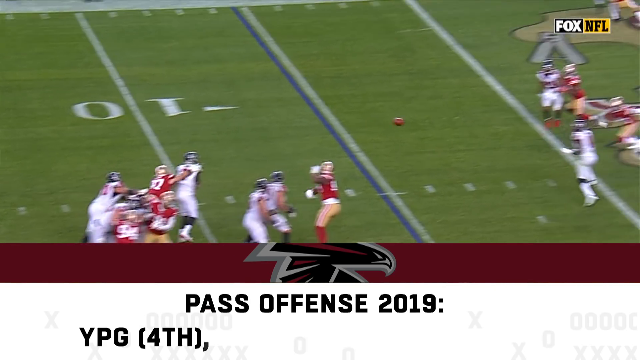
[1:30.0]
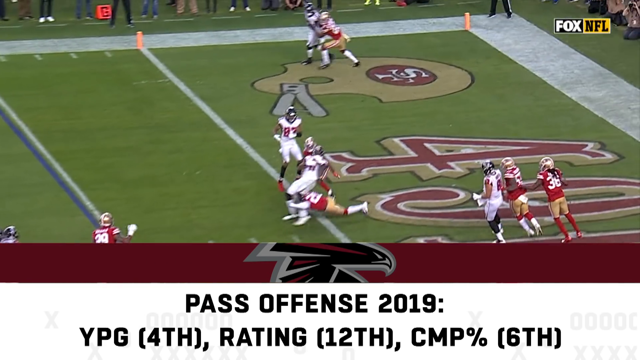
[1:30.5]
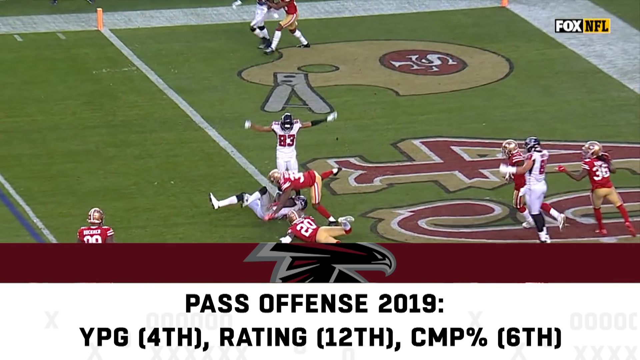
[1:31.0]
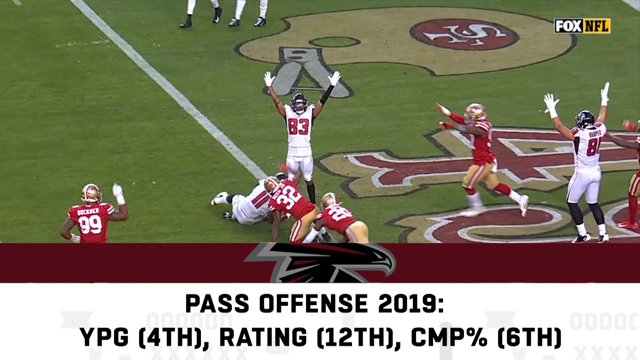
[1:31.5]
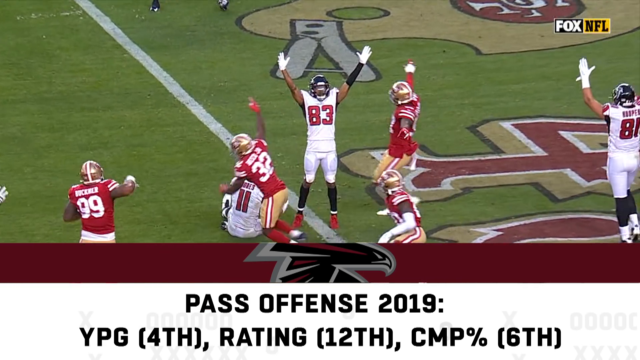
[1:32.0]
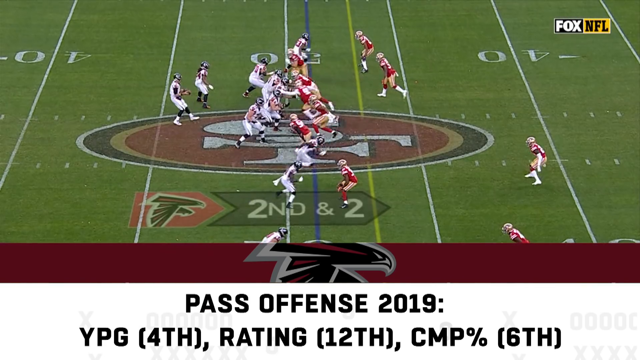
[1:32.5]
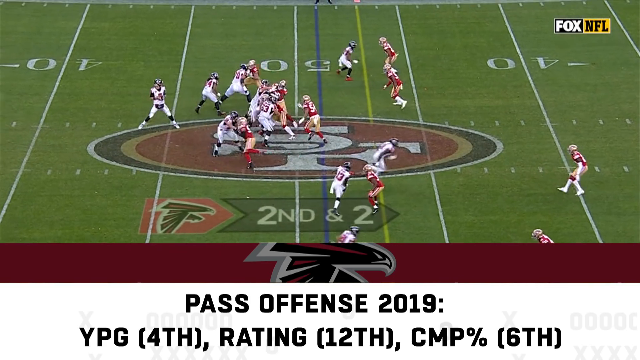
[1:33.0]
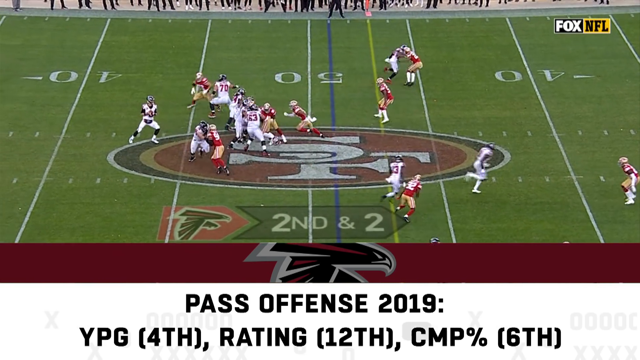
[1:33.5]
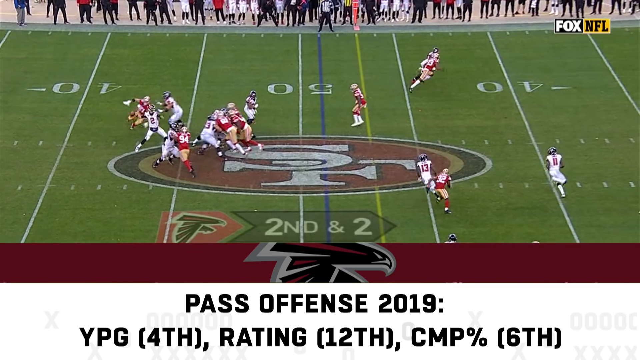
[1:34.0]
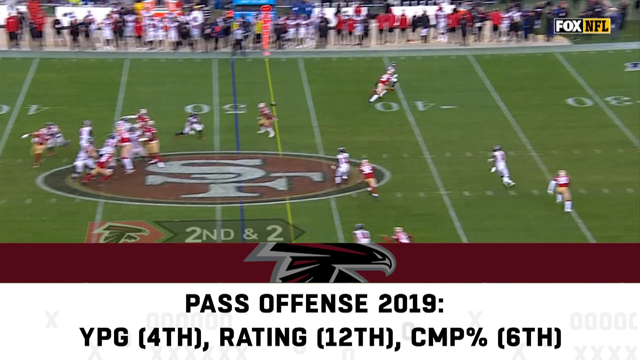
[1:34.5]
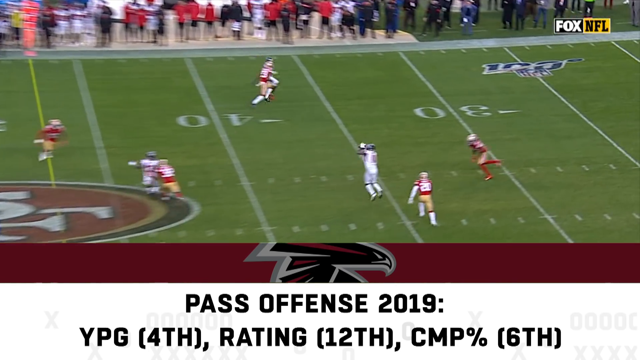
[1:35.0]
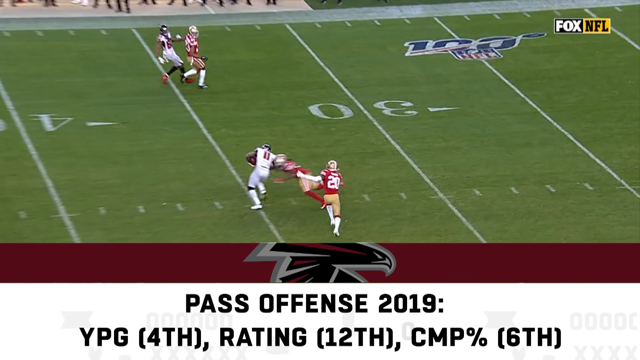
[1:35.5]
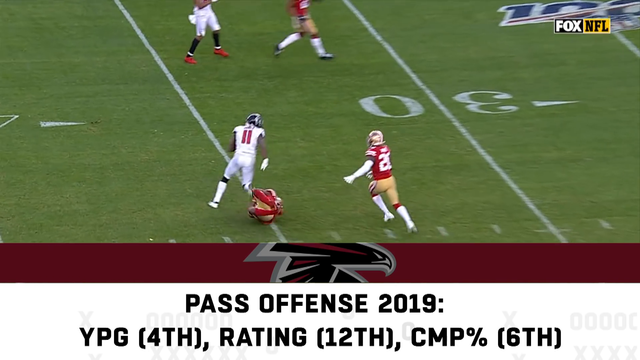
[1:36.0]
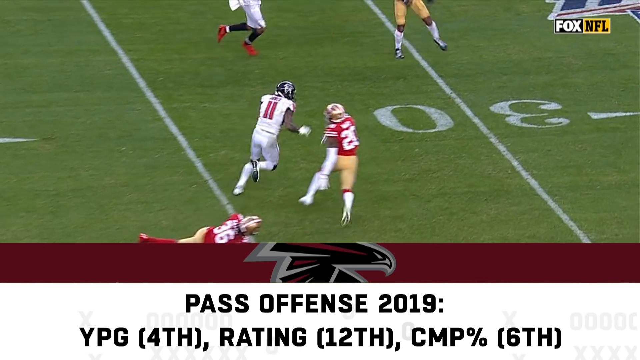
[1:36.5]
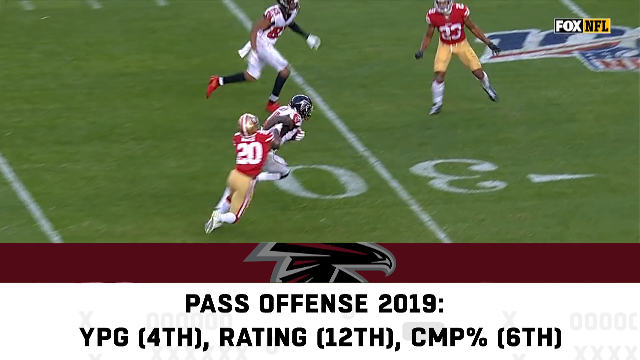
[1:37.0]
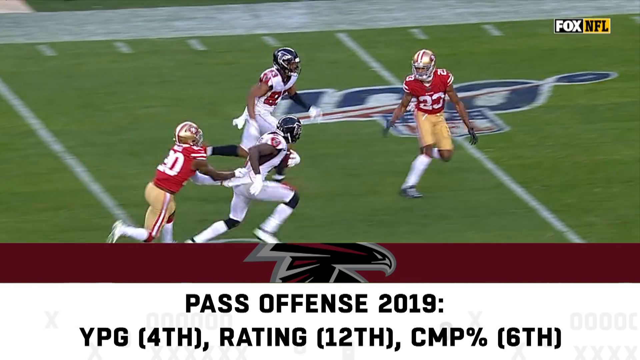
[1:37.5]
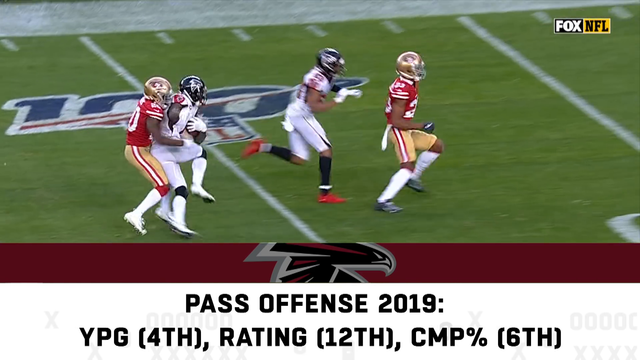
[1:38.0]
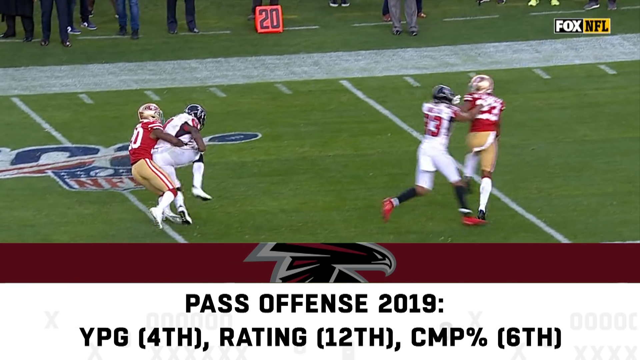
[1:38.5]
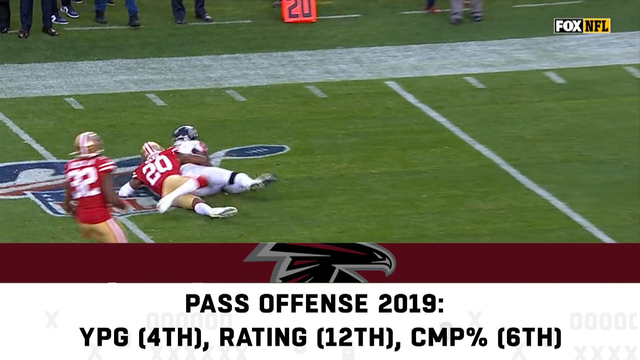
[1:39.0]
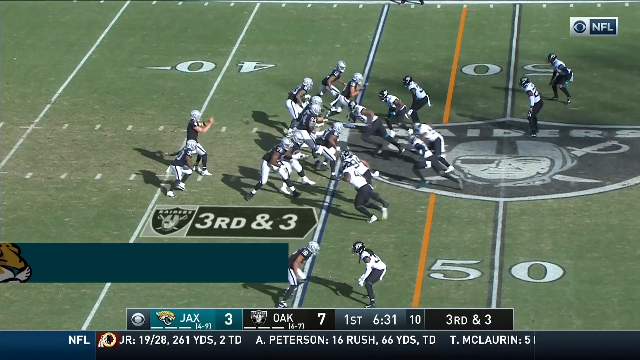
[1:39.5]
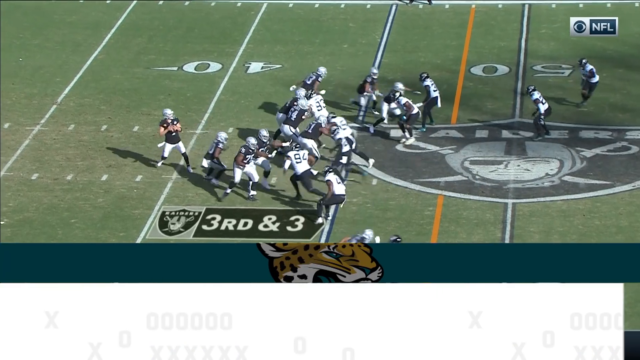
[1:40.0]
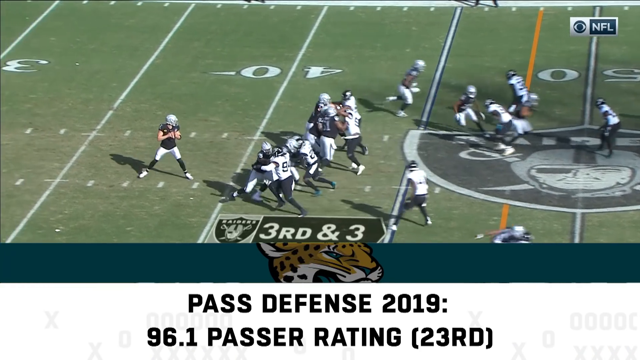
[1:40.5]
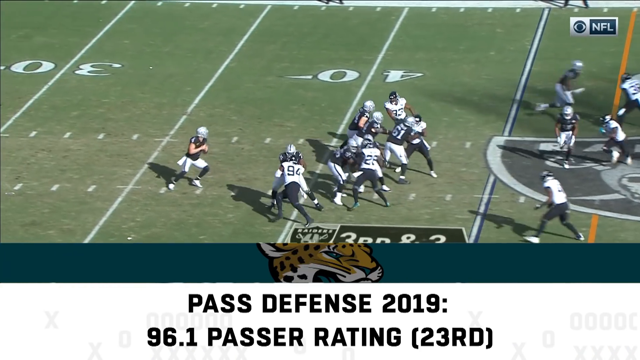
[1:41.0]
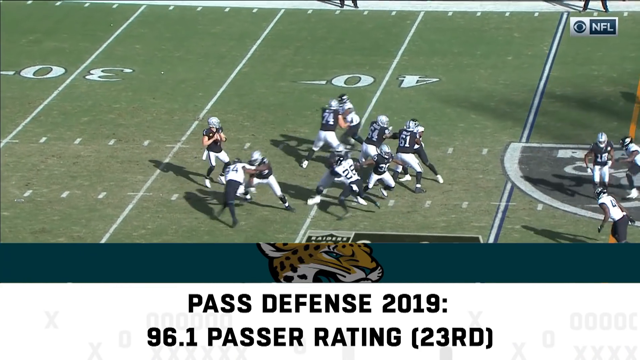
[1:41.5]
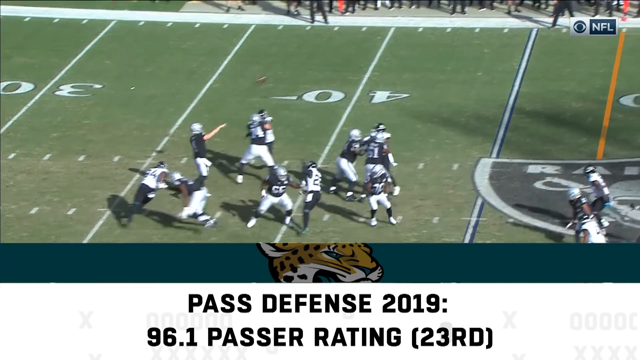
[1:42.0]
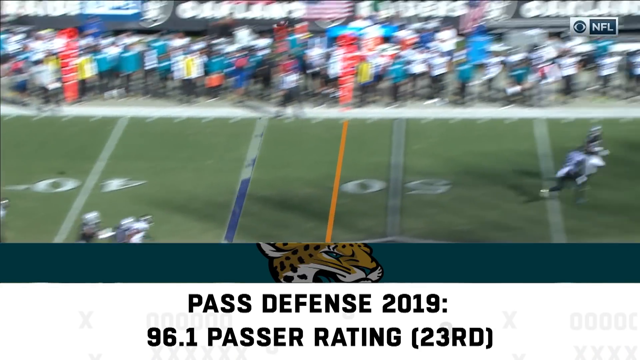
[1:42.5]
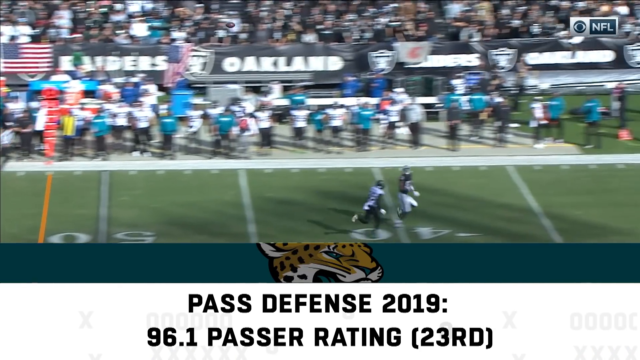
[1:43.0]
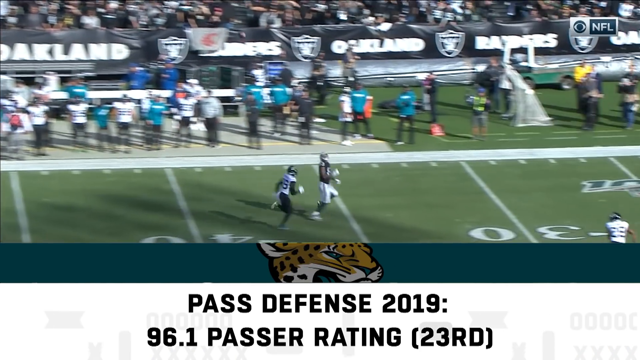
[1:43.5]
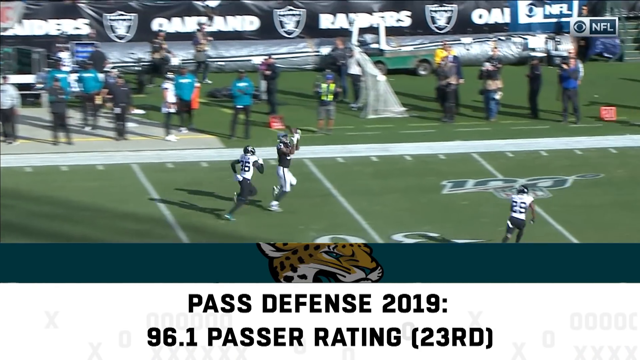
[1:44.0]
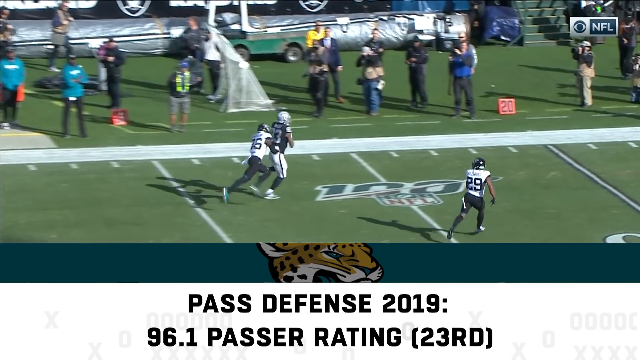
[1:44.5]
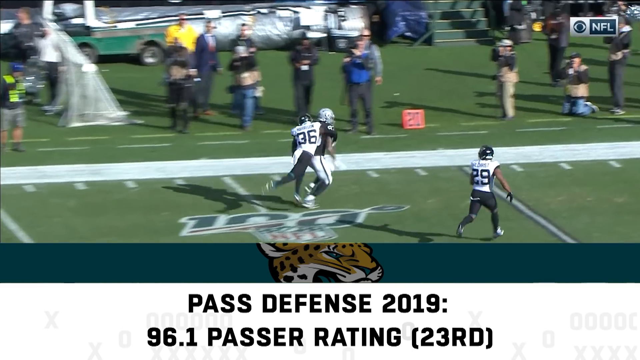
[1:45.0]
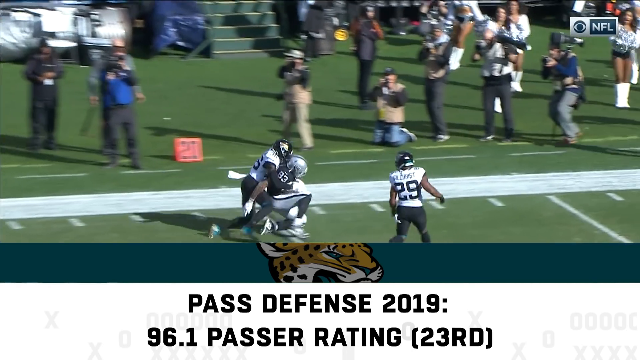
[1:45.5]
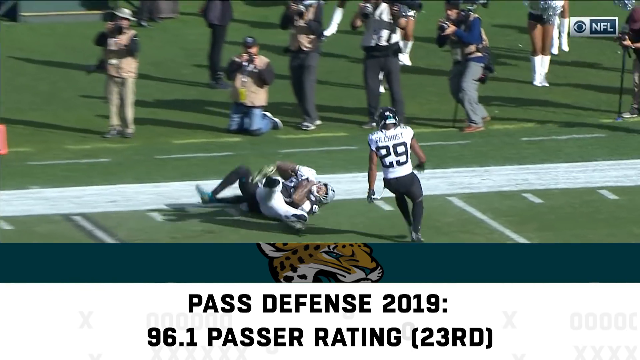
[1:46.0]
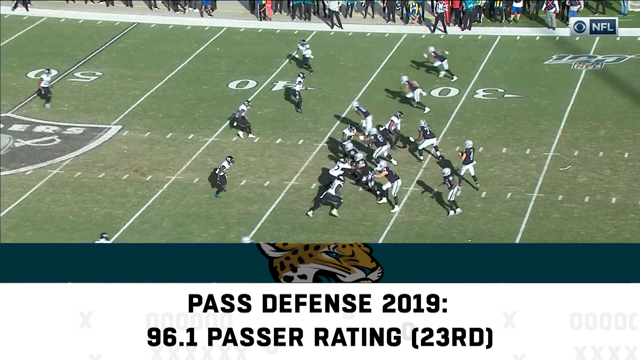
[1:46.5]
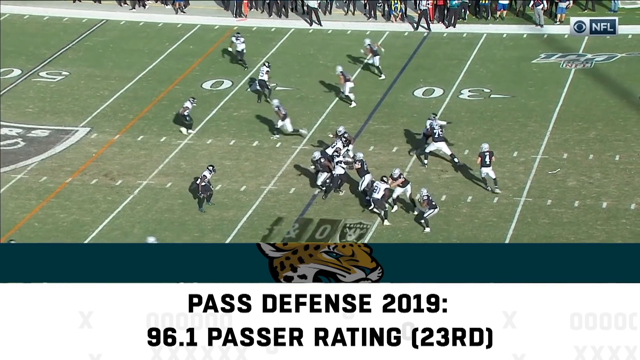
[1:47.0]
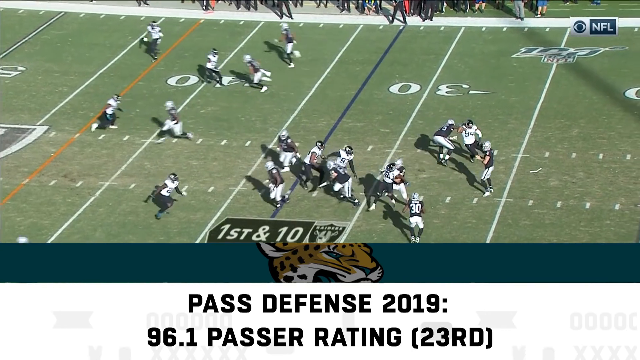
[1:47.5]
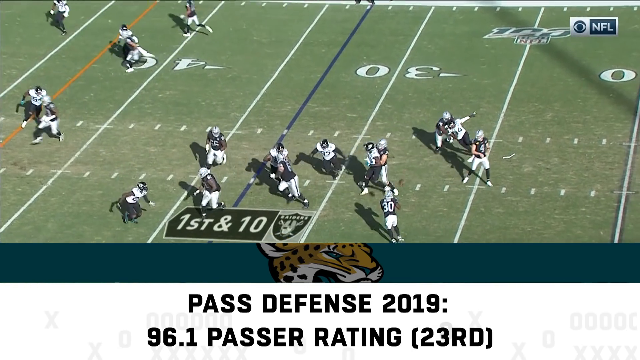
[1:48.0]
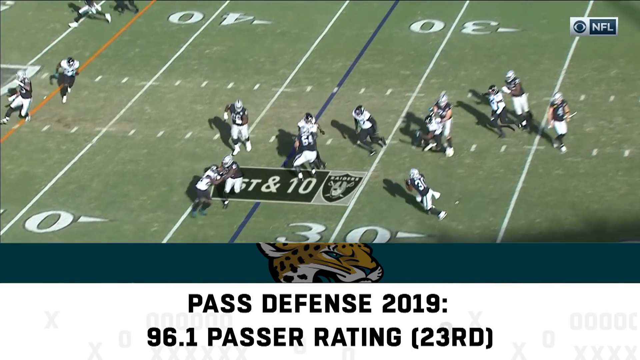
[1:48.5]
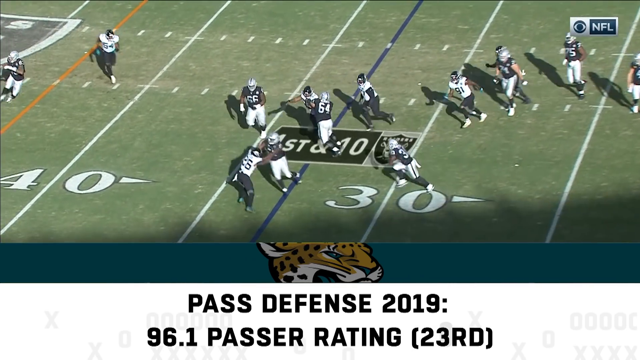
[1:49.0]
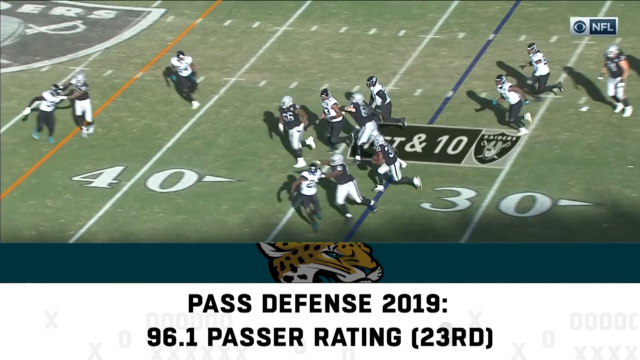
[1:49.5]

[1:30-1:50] The Atlanta pass goes into the end zone and a Falcons player catches it, though it is unclear whether it is a touchdown. The Falcons then complete a sizeable pass downfield. The video shifts back to the Oakland Raiders, whose quarterback passes very far downfield to his wide receiver for a decent gain. The Oakland quarterback then throws a short pass to the left to a teammate in a fairly open position.